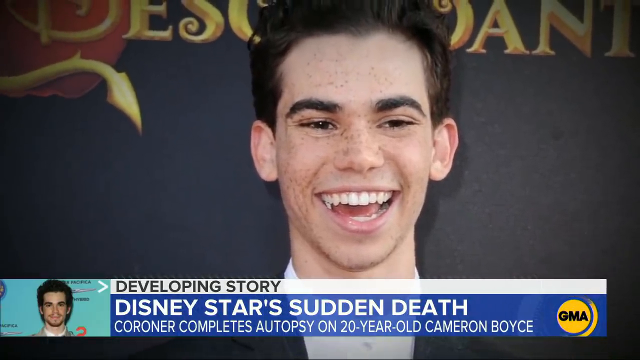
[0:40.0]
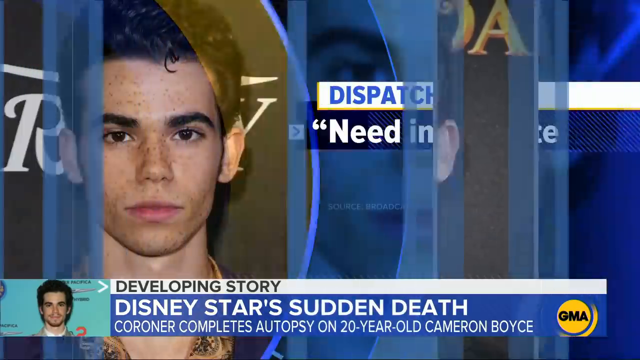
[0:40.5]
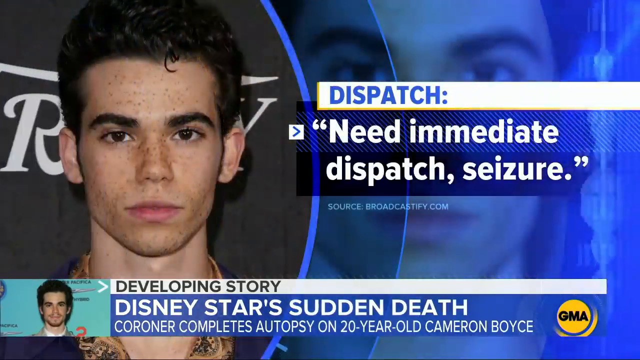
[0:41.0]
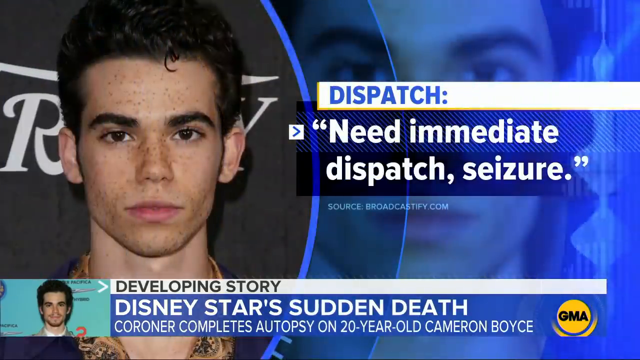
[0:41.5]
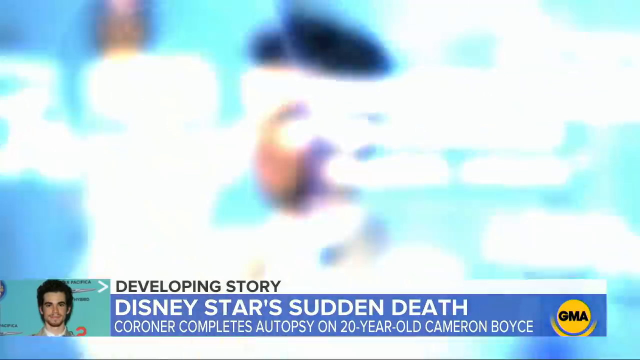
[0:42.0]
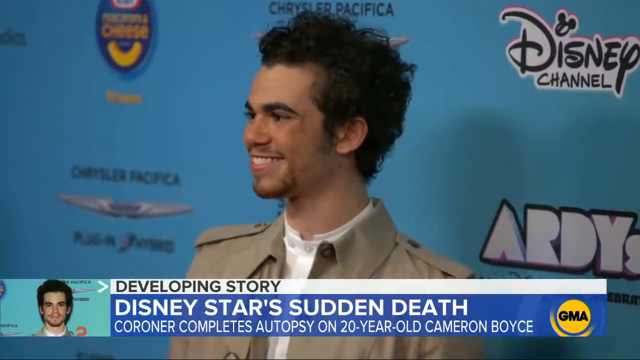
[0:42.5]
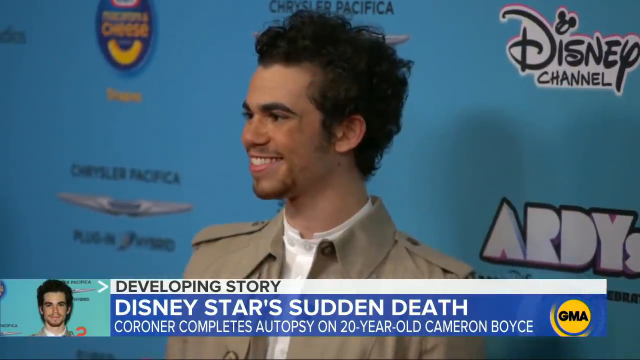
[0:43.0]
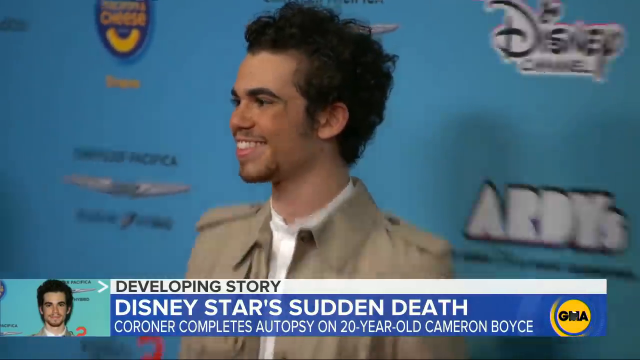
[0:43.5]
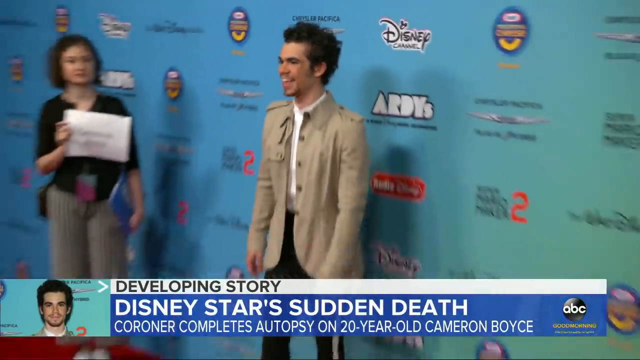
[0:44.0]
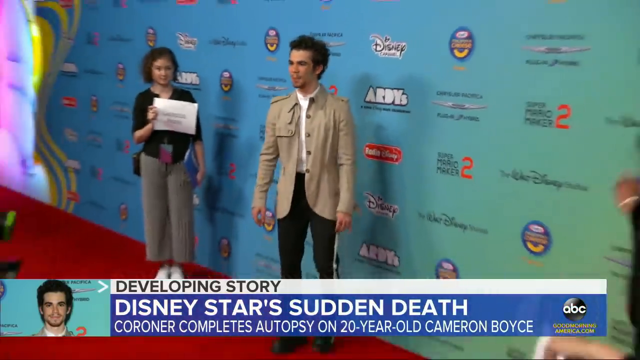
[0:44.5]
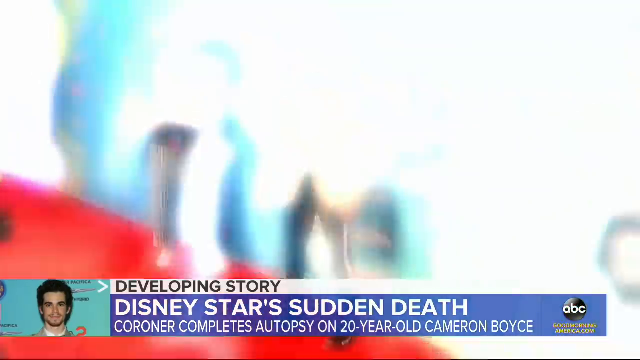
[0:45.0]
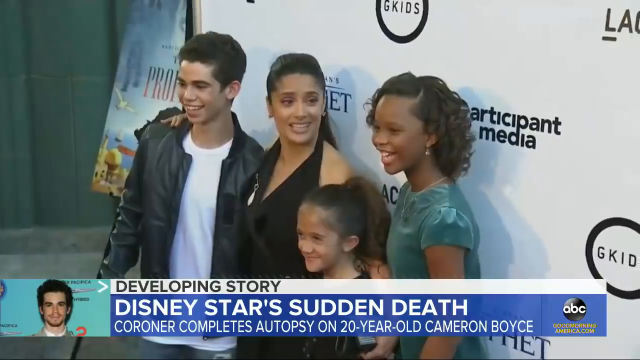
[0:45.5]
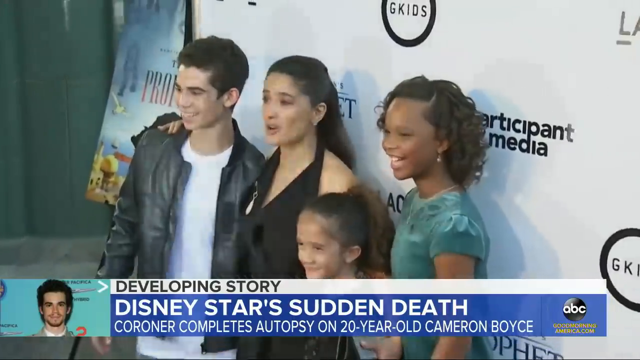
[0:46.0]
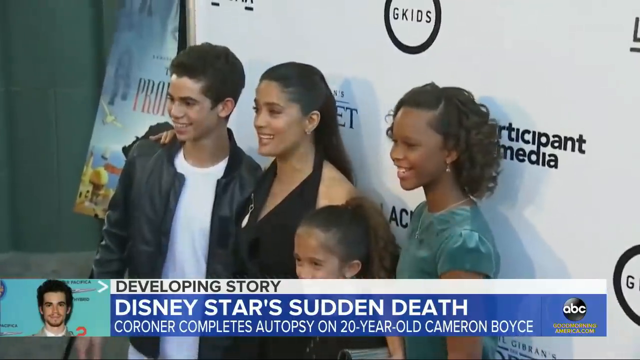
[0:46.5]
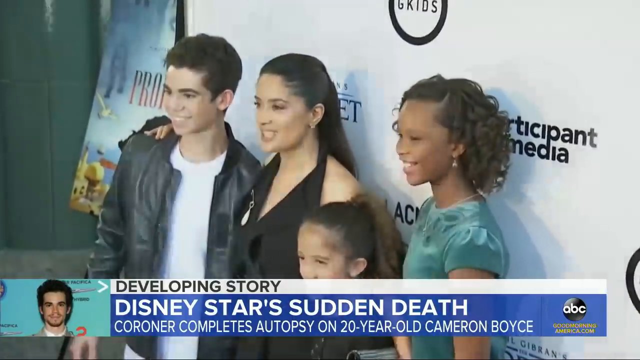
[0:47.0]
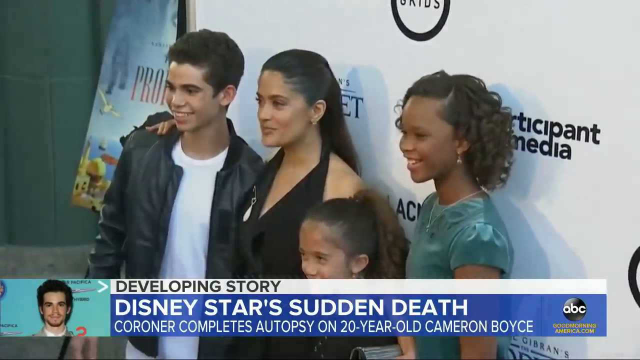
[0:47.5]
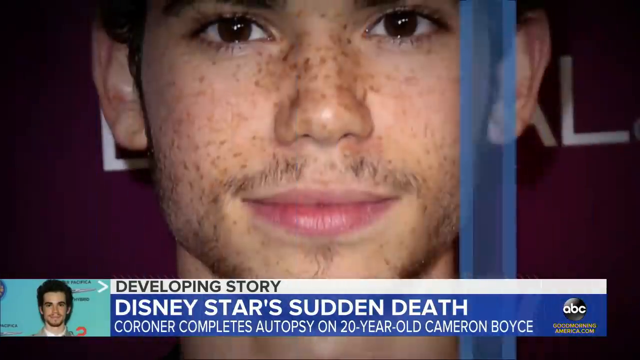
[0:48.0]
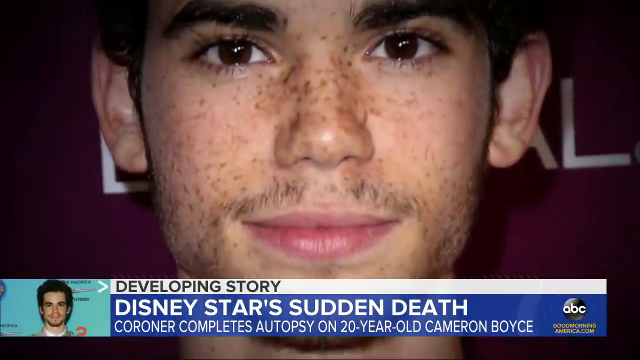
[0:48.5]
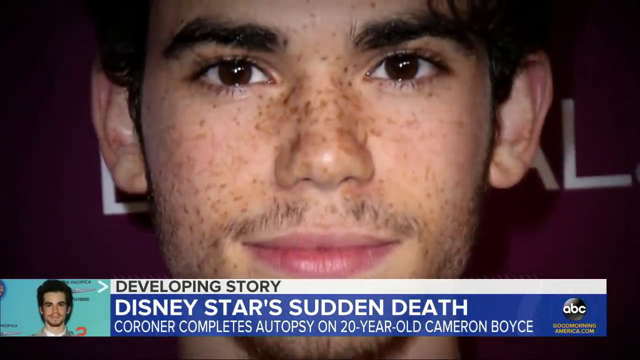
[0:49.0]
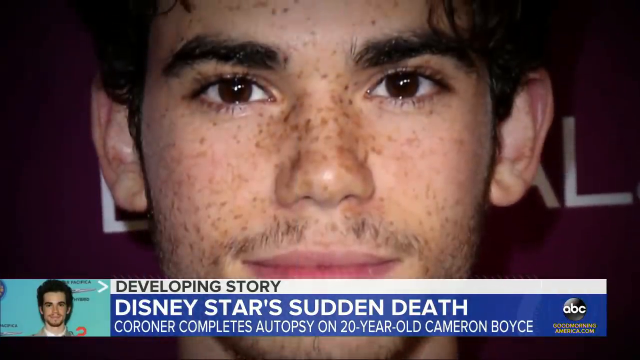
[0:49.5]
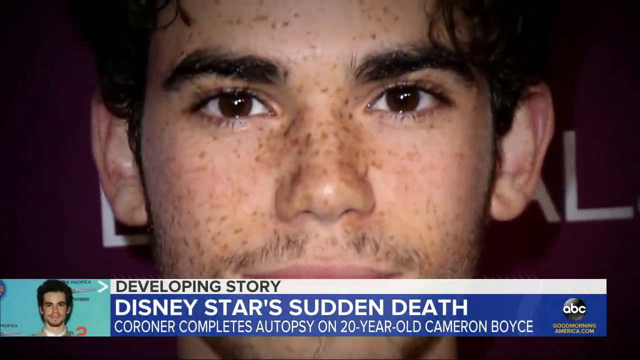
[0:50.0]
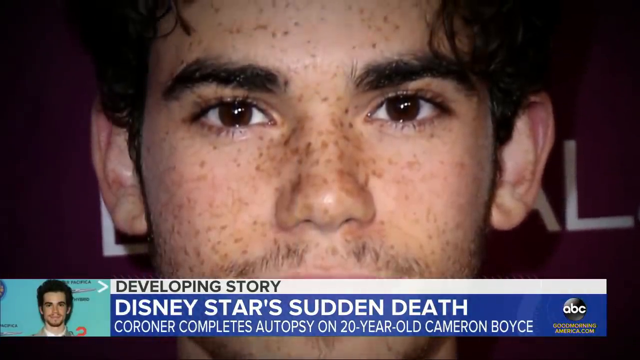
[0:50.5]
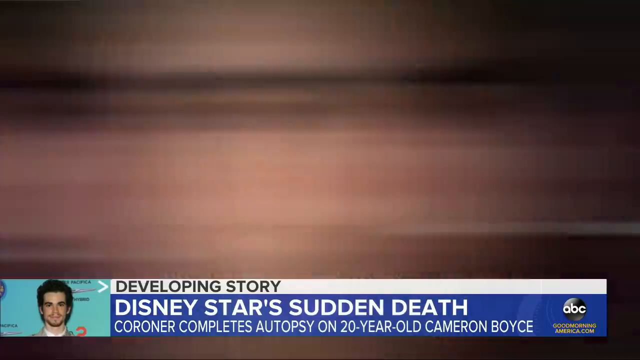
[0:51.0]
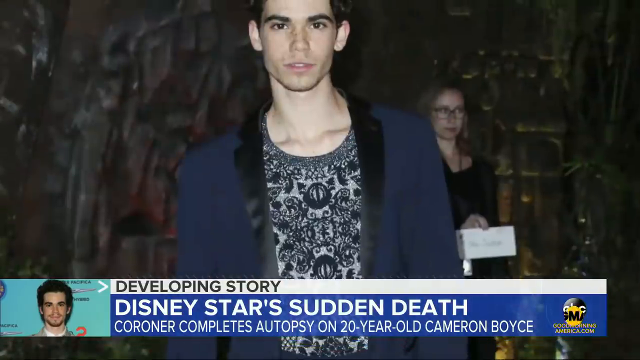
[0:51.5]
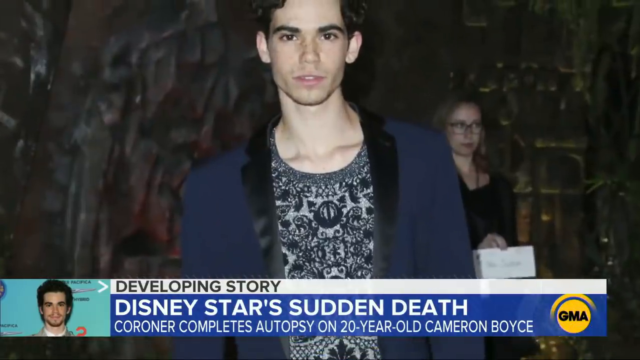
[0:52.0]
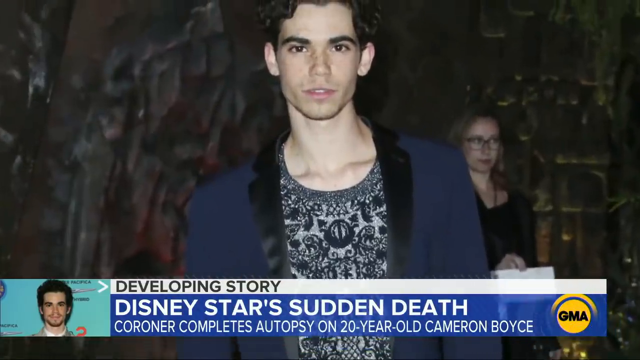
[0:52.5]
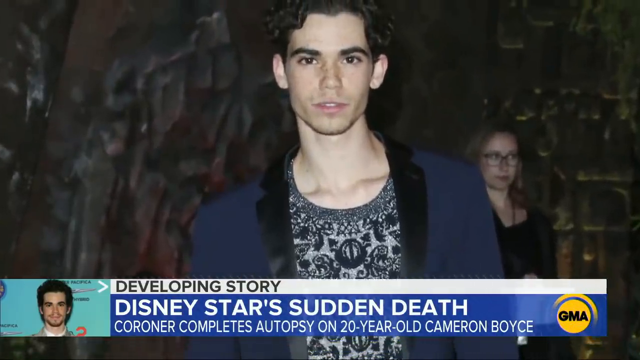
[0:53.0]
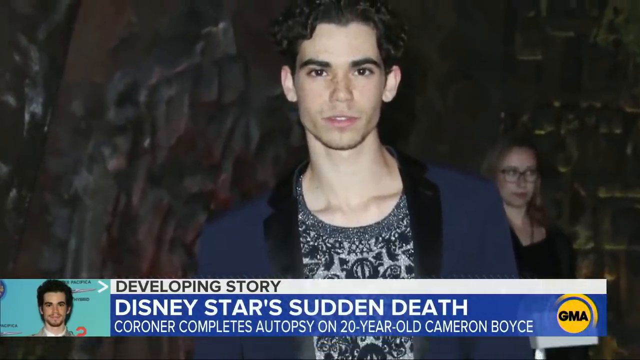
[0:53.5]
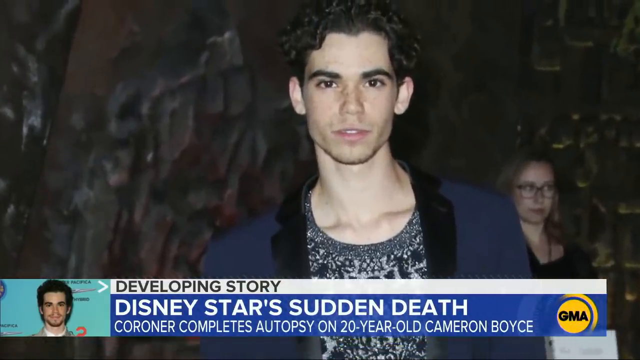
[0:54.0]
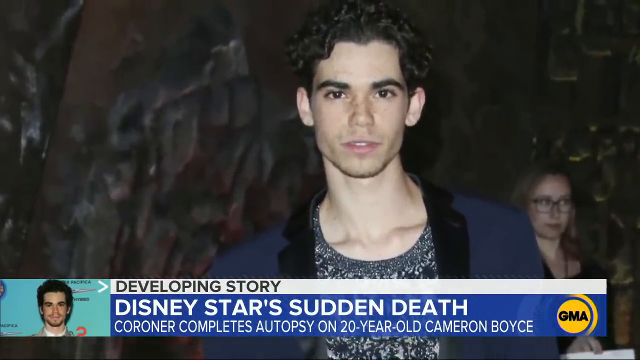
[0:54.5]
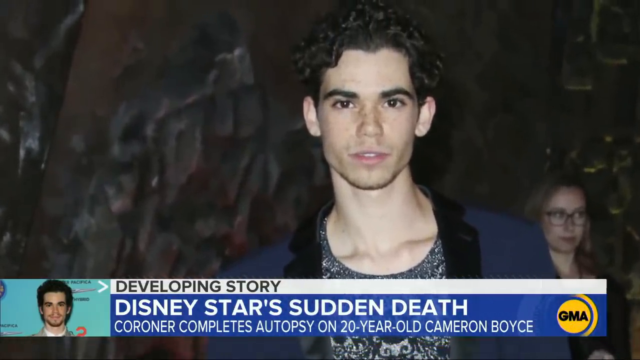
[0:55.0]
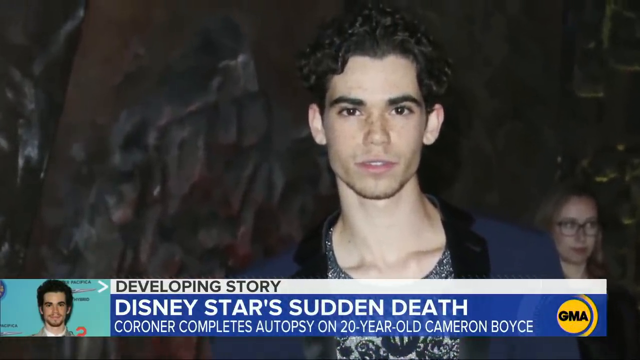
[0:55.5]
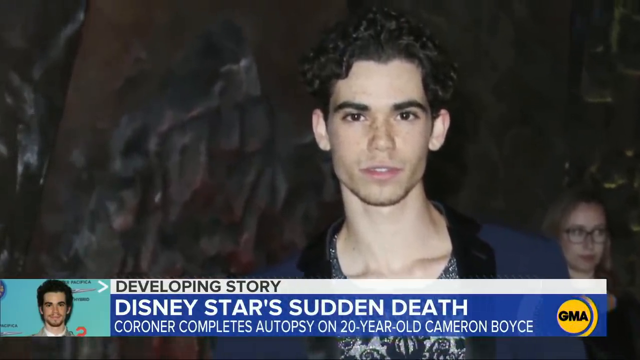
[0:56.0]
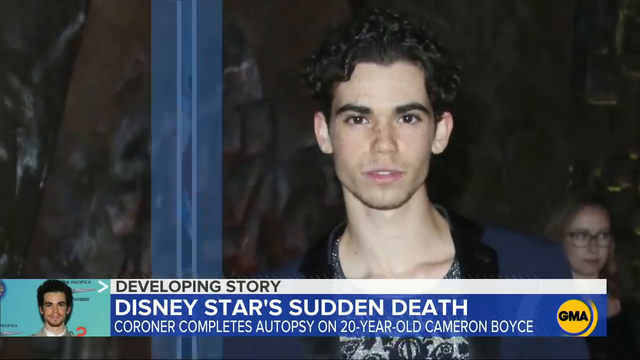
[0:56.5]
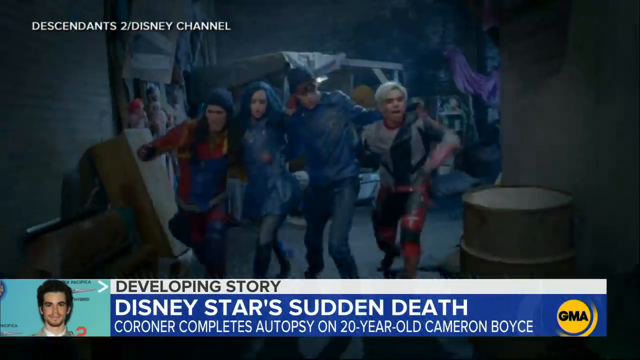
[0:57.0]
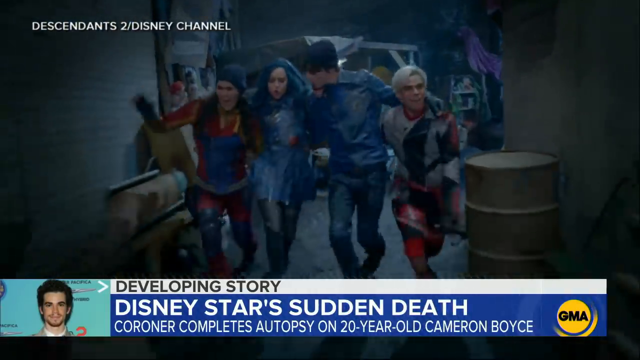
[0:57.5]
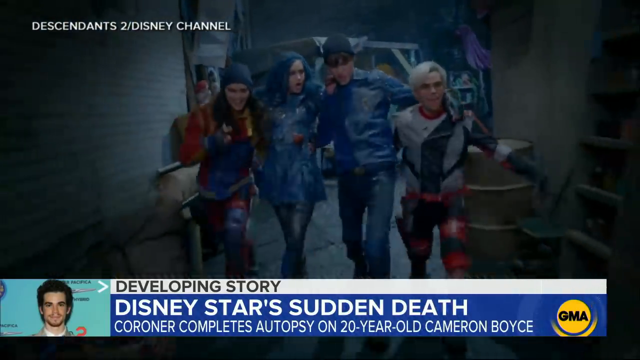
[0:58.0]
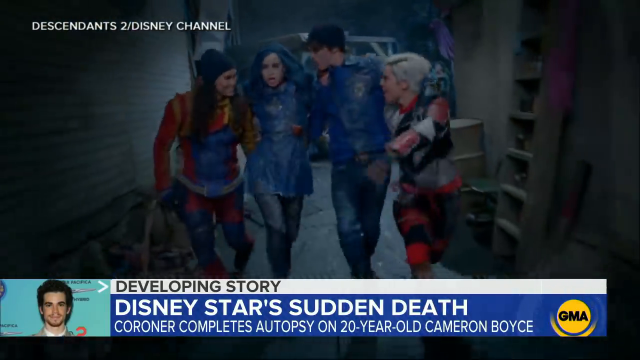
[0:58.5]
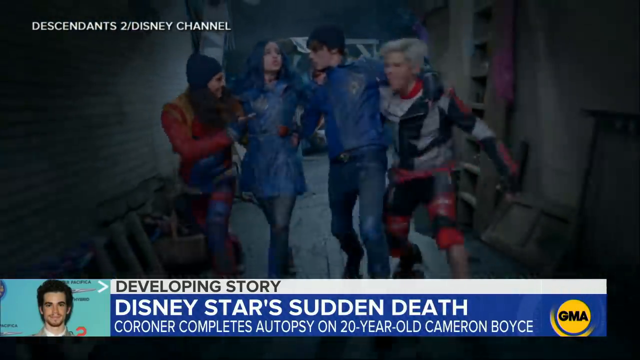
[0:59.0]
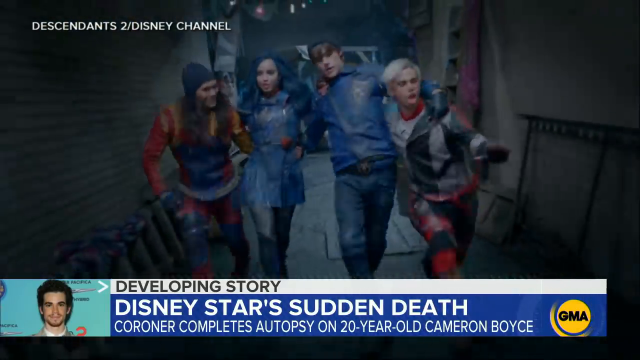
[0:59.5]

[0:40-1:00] The photo transitions to another photo of Cameron Boyce on the left side of the screen, in which he smiles with a closed mouth and a more neutral expression. On the right side is a title reading "dispatch", with a white banner beneath it containing the quote "need immediate dispatch seizure" and the source "broadcastify.com" underneath. The next shot shows Cameron Boyce from the left side of his face, smiling toward cameras in front of a Disney backdrop; the camera zooms out to reveal that he is standing on a red carpet with other people in the shot. The next shot shows him with three other actresses, with him standing on the right of the group. Next comes an extreme close-up of his face showing many freckles as he smiles with a closed mouth. In the following shot he wears a blue and black blazer and stands tall, mostly his chest visible, before it zooms into his face. A very quick clip follows from the Disney Channel movie Descendants 2, in which he walks in a group of four while acting in a scene.